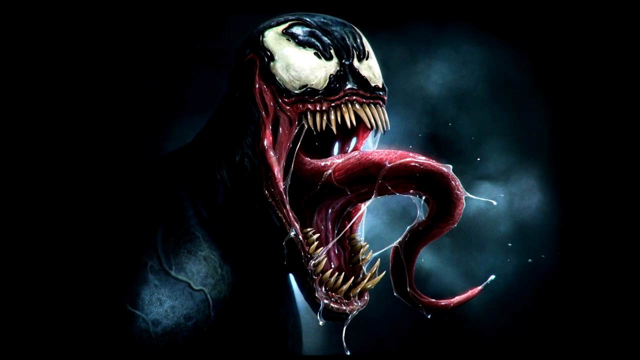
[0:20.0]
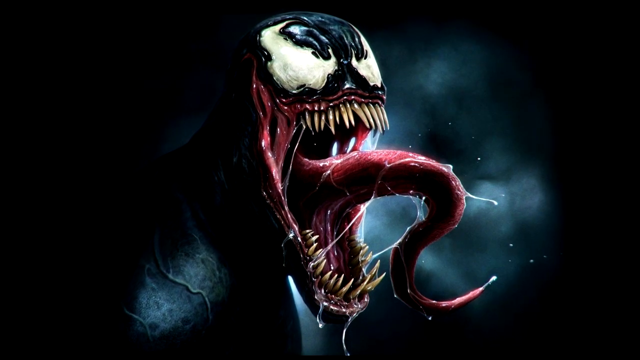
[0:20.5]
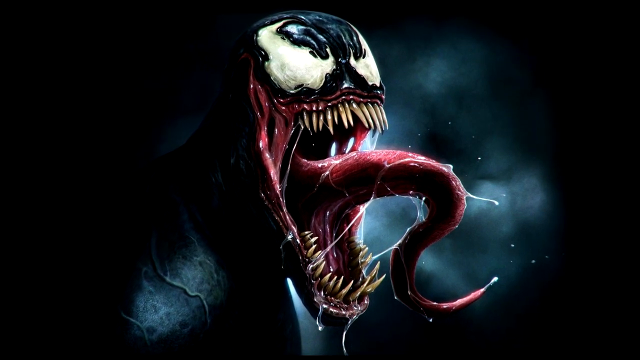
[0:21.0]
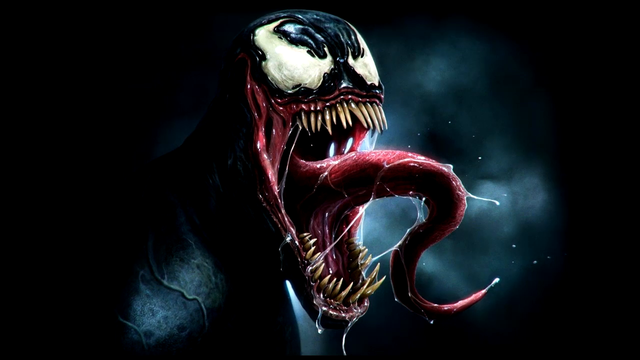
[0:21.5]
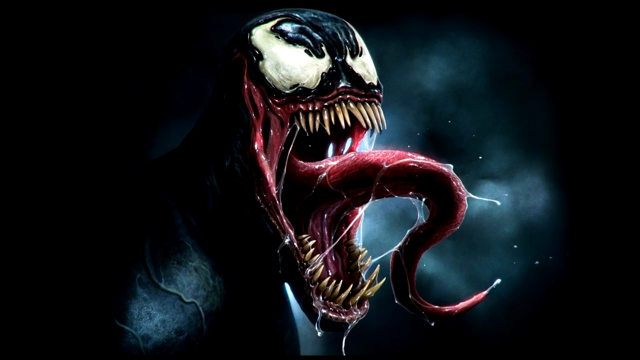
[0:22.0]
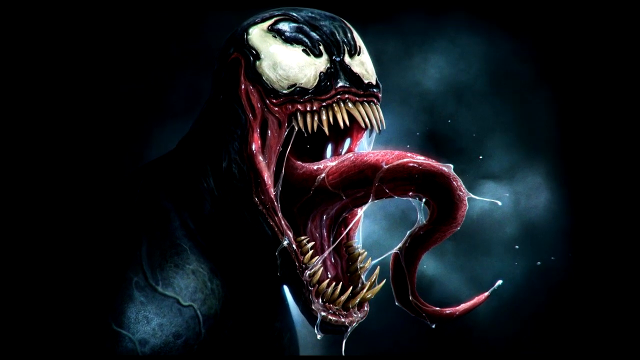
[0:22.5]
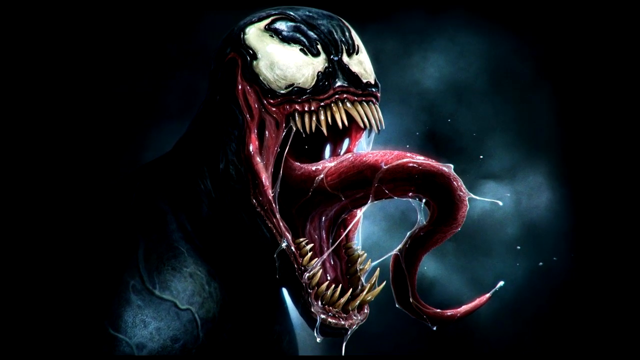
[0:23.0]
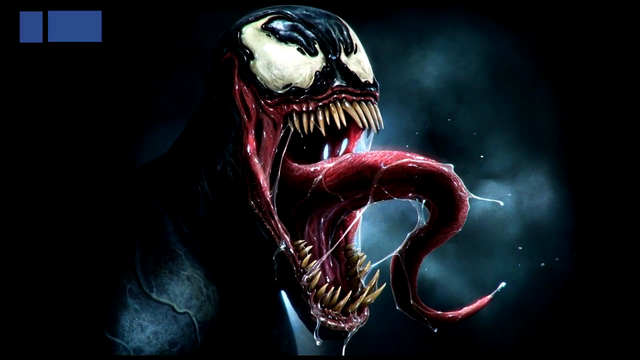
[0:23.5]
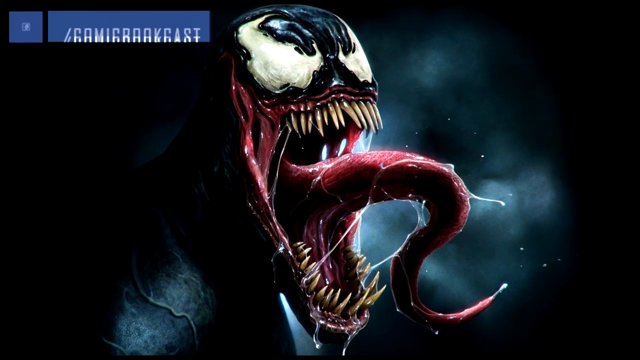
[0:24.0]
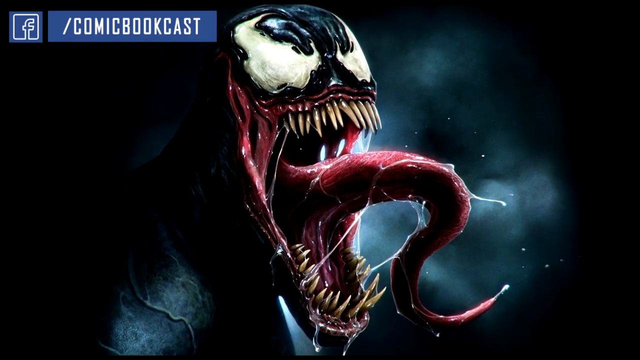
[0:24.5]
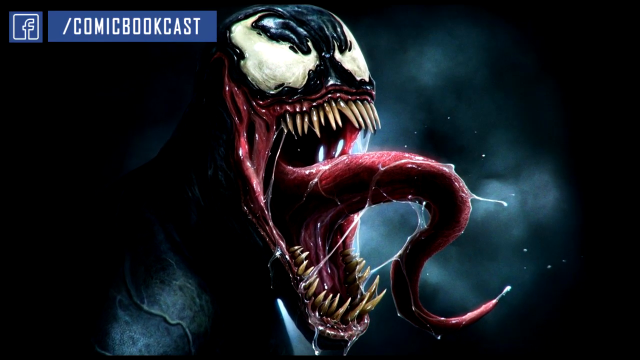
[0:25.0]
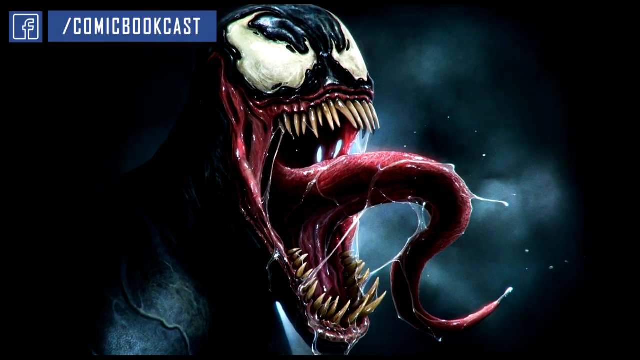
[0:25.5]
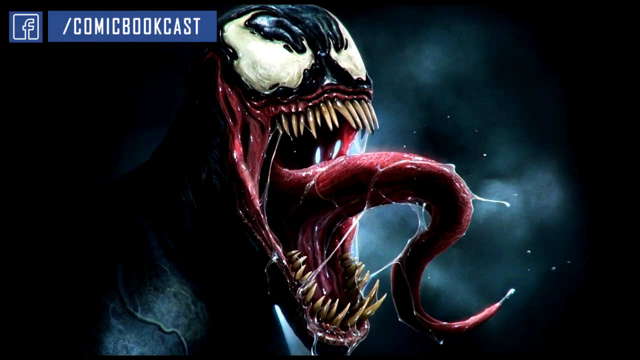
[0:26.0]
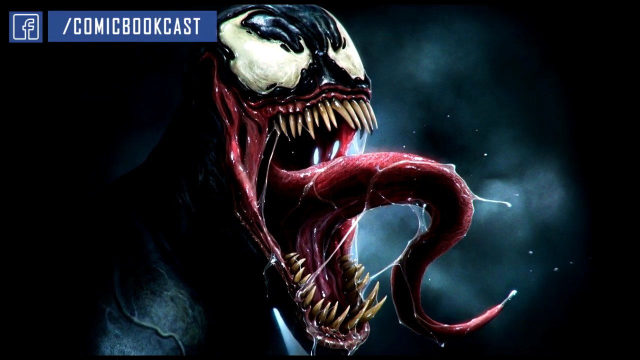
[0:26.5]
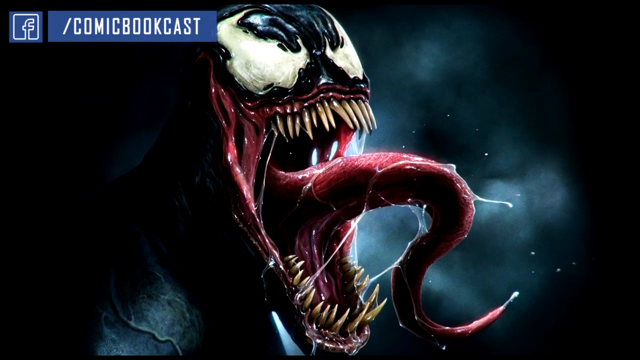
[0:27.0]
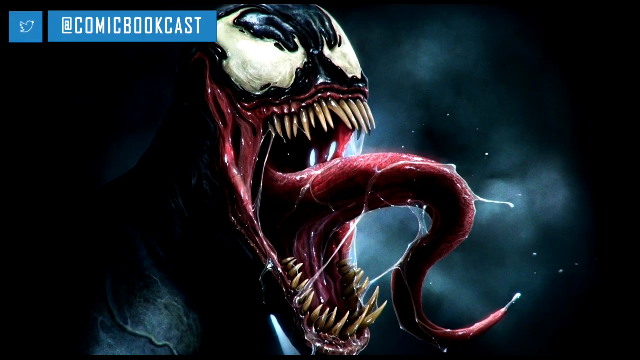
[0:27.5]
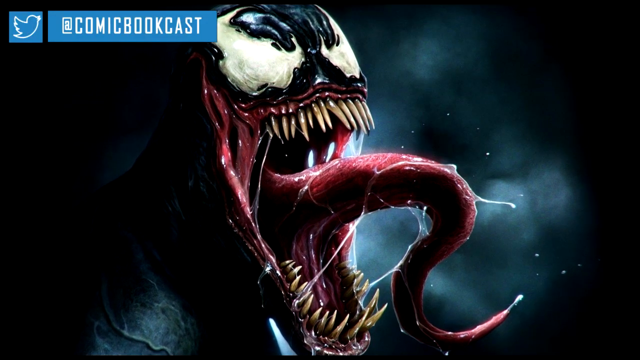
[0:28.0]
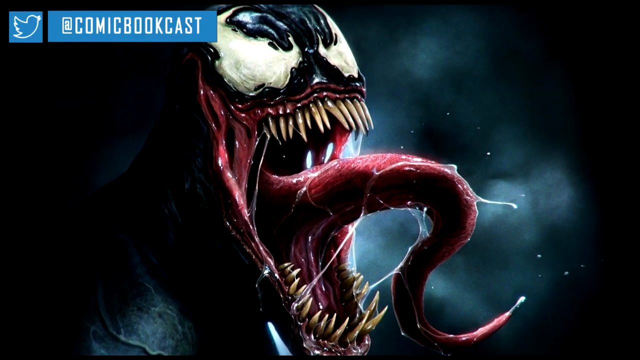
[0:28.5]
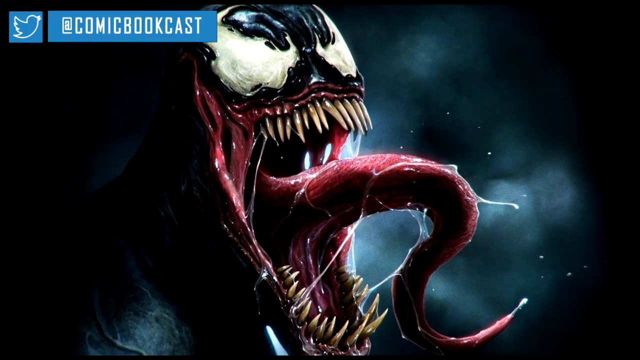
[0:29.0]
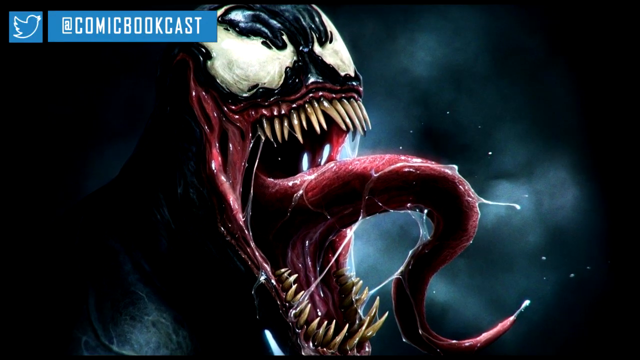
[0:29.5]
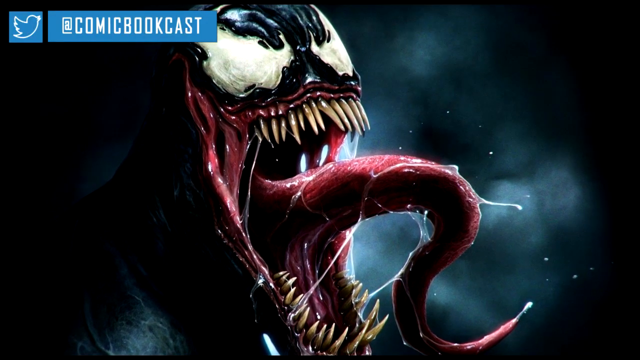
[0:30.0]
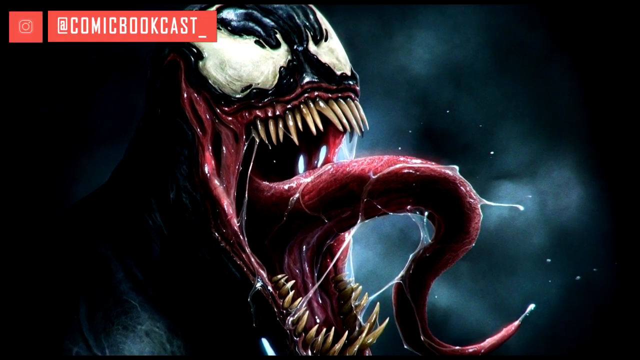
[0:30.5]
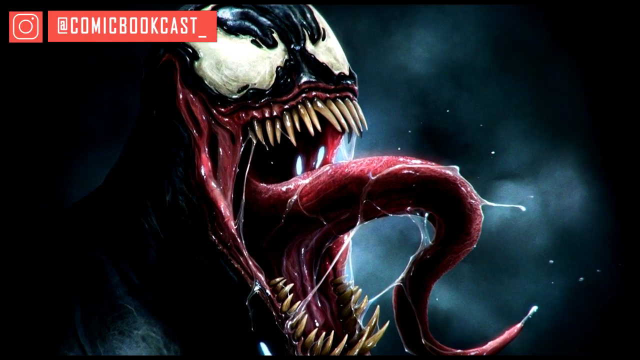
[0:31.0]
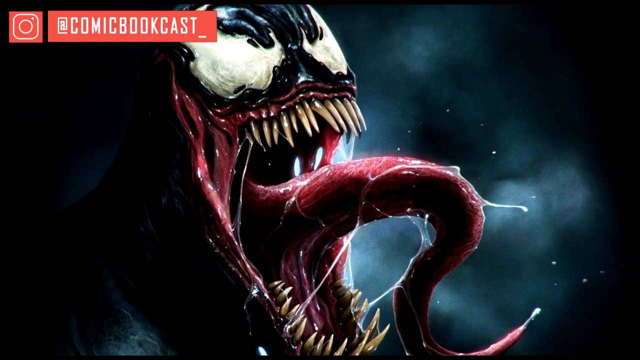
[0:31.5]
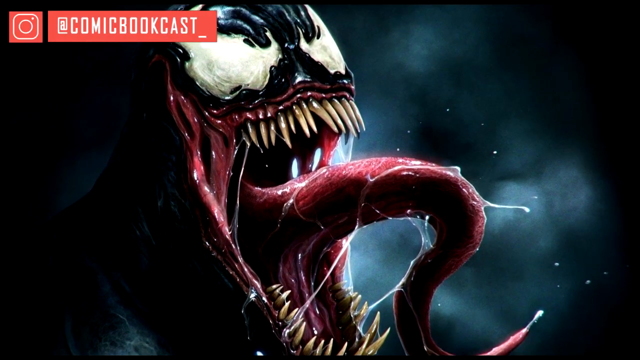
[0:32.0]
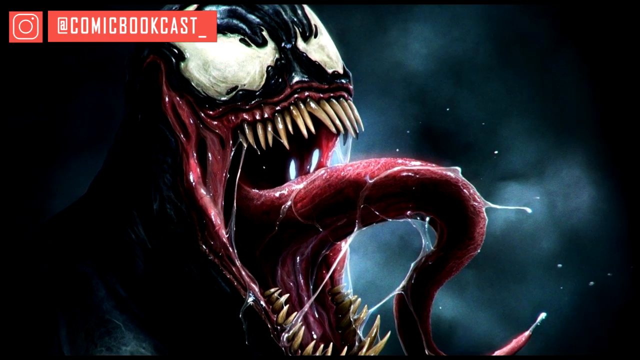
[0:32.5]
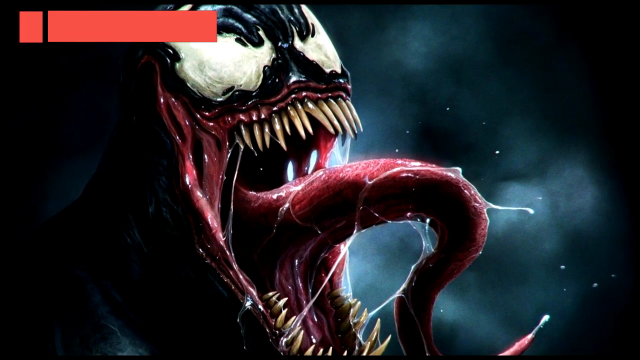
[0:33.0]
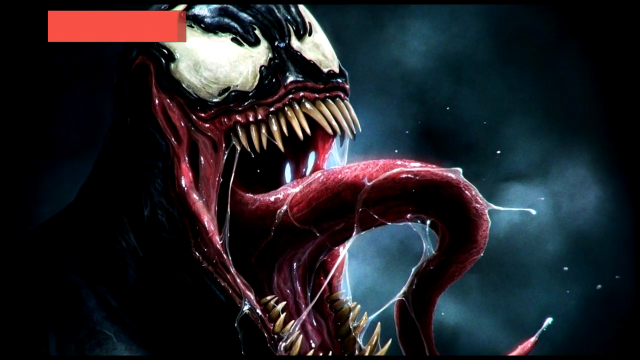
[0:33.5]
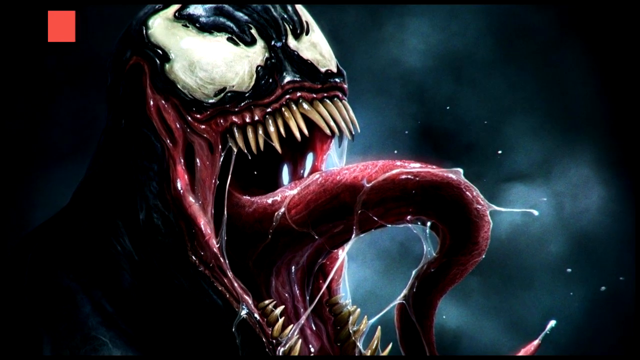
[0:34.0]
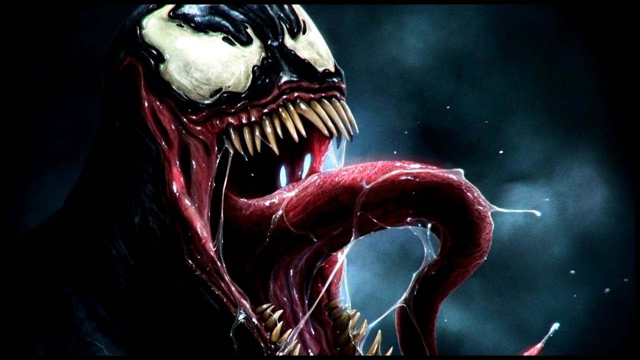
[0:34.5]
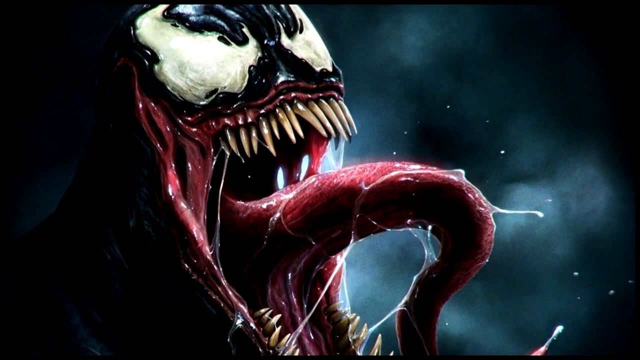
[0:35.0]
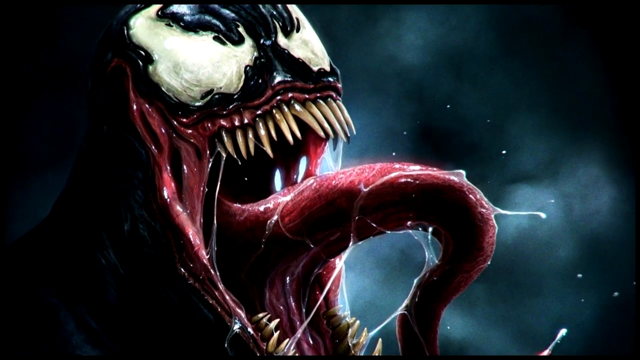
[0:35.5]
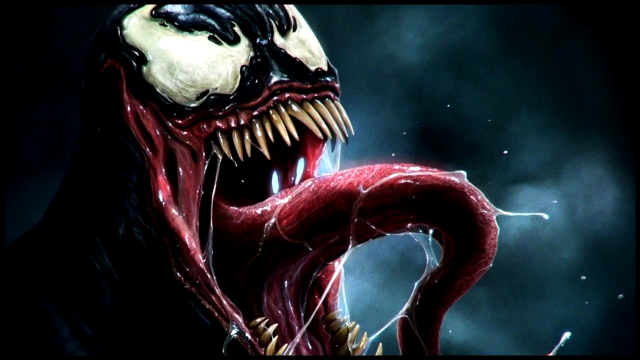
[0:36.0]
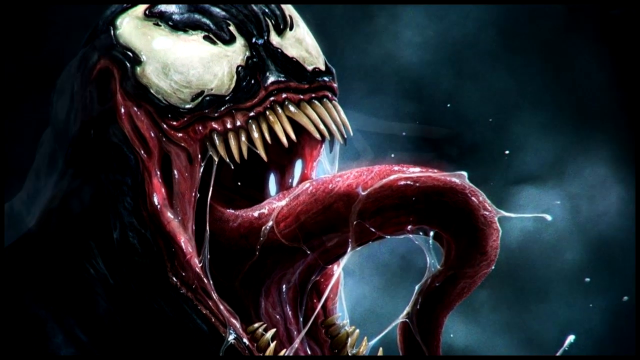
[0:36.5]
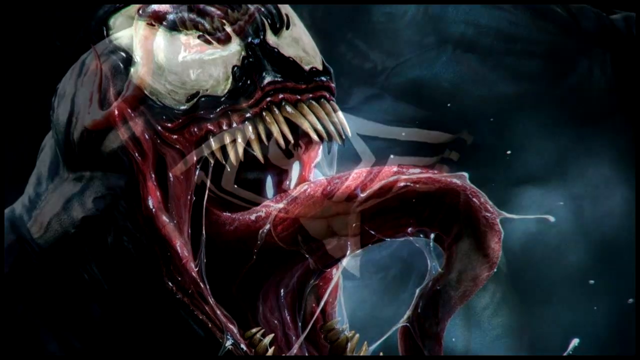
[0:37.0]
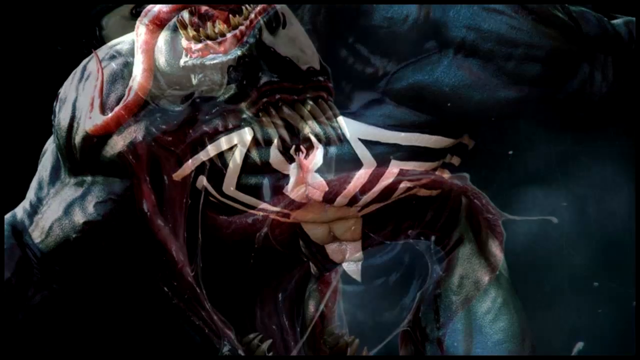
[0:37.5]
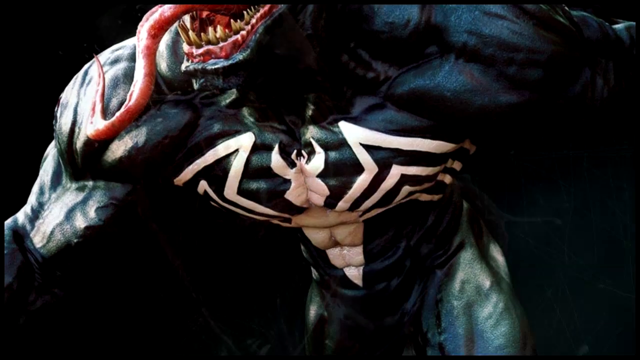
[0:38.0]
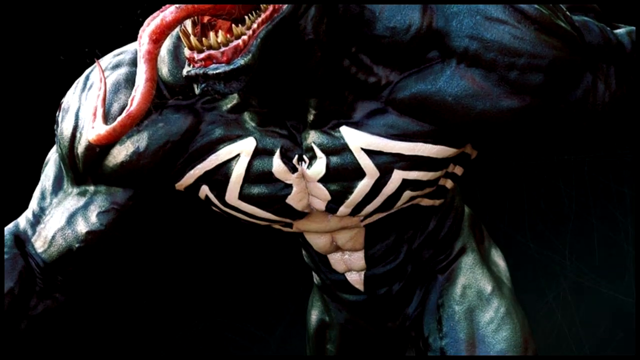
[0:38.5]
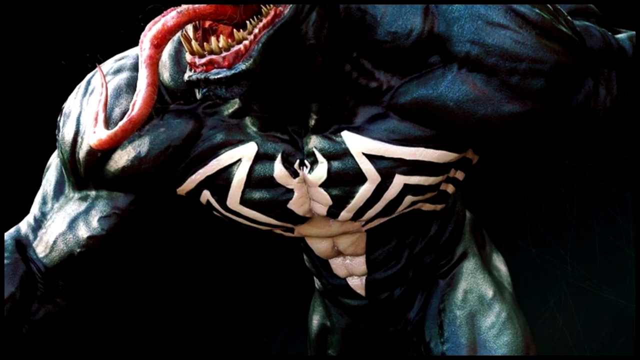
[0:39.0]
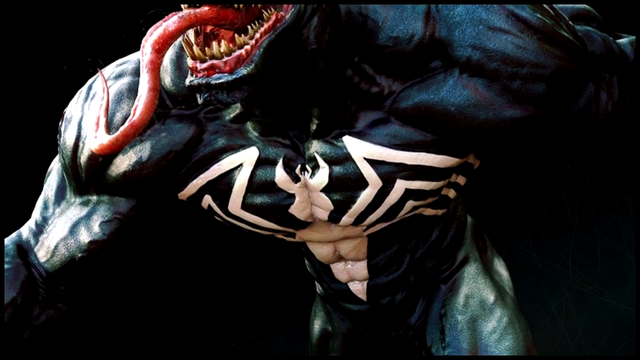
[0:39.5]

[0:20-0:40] An illustration or drawn picture of the Venom movie character, possibly drawn by hand or by software, shows only the Venom creature, without the man, against a black background. Appearing out of the darkness toward the bottom left of the screen is a little of the creature's body, with greyish patches that have what look like veins on them. The view is from the right side of the creature. Its mouth is completely open, with the jaw hanging open toward the bottom of the screen; the inside of the mouth is red and the shadows are black. A massively long tongue emanates from the middle of the back of the mouth, thick at the base and narrowing to a point, bent like an S. The tongue is shades of red and sometimes black, covered in spittle, some of which connects from the tongue to the teeth. The teeth are razor teeth, all like fangs, and yellowish brown. The image slowly zooms in and, while zooming, rotates very slowly toward the left.